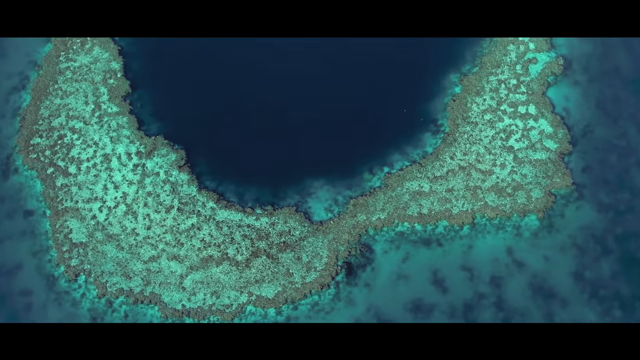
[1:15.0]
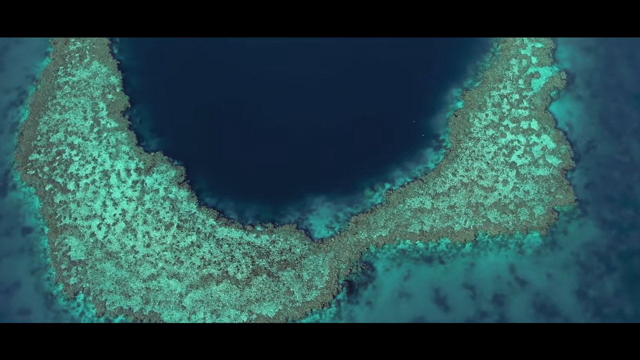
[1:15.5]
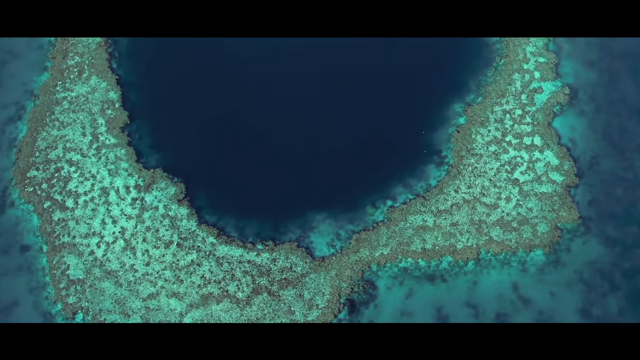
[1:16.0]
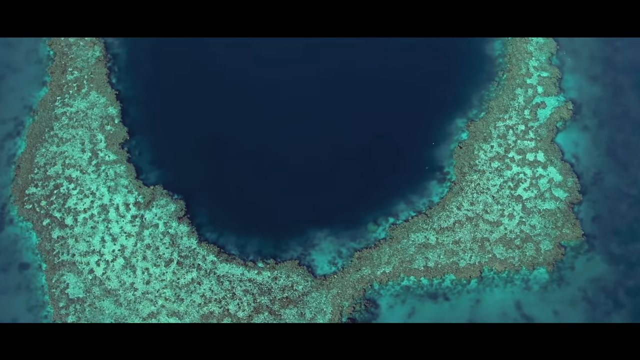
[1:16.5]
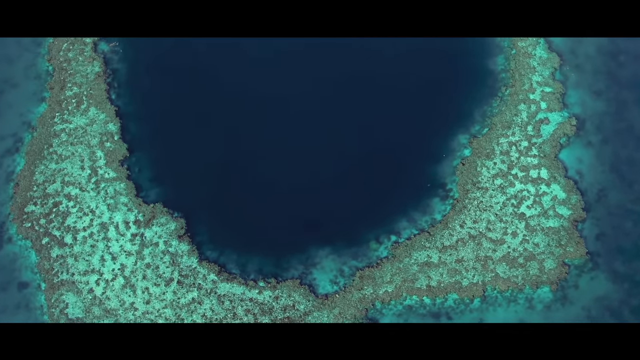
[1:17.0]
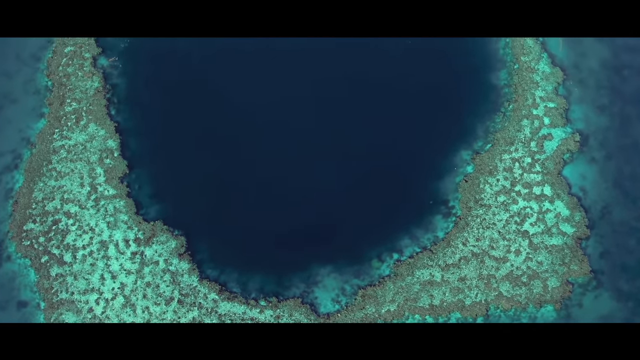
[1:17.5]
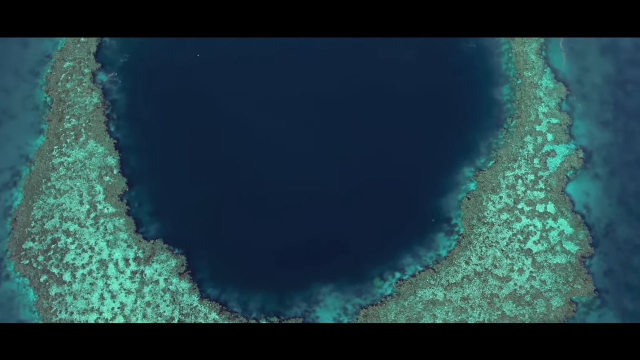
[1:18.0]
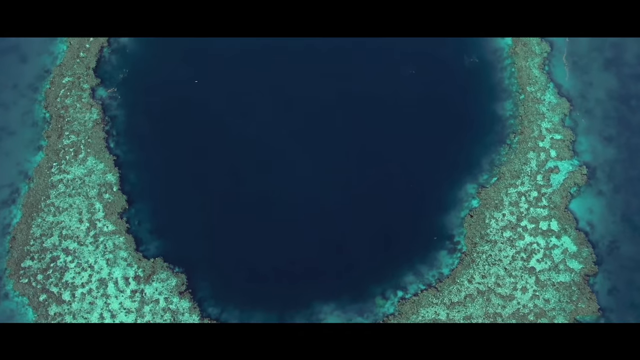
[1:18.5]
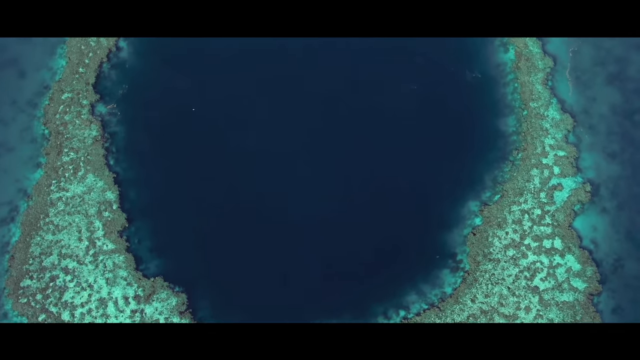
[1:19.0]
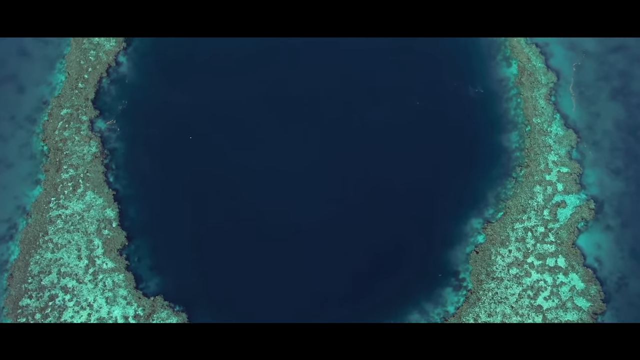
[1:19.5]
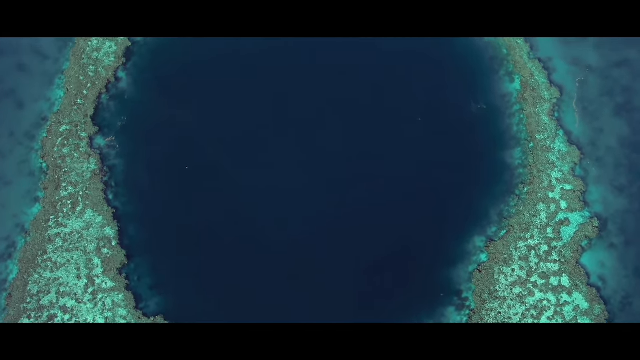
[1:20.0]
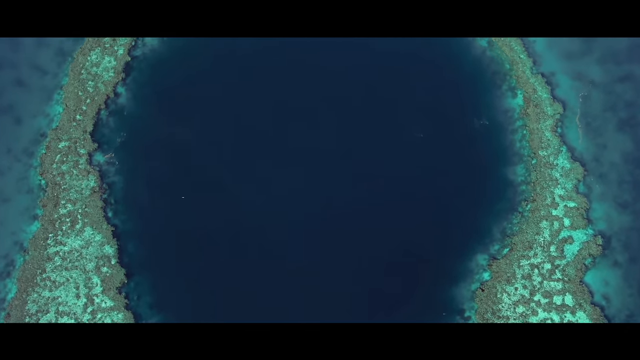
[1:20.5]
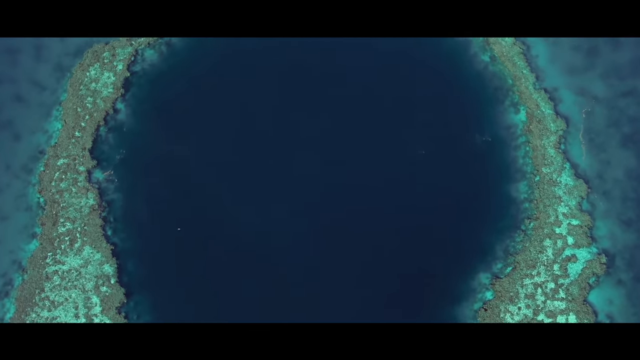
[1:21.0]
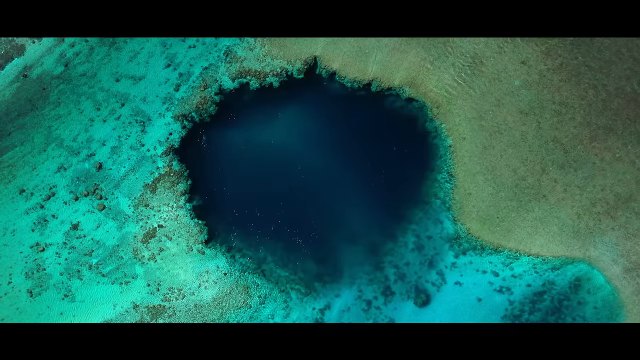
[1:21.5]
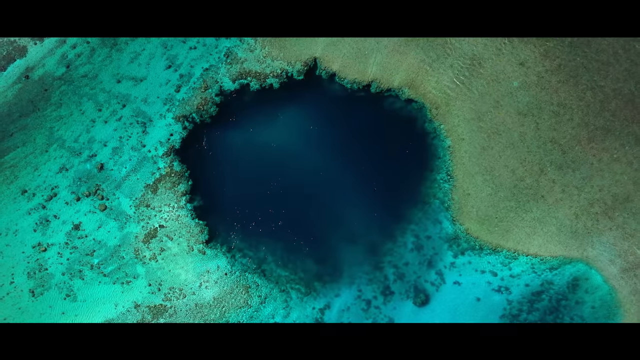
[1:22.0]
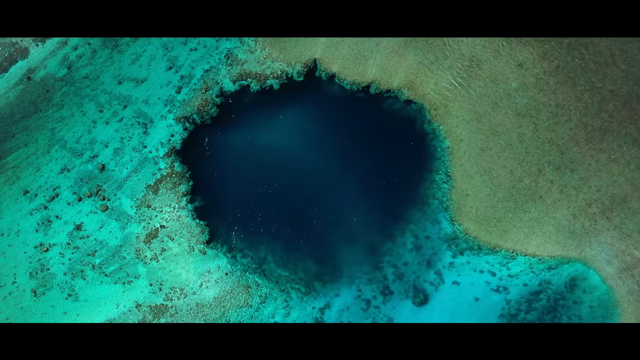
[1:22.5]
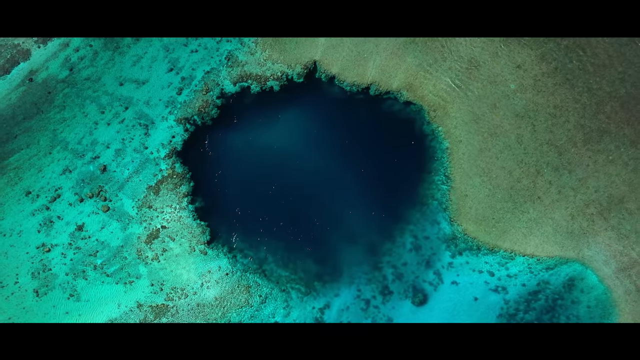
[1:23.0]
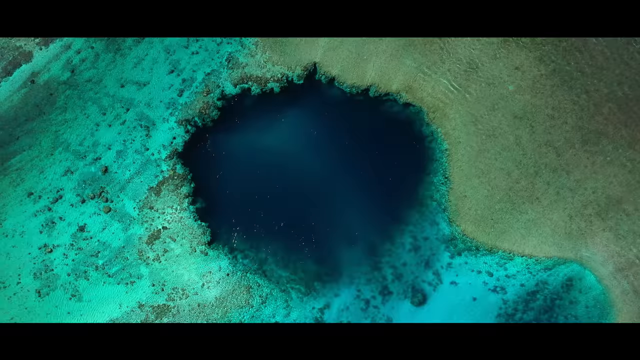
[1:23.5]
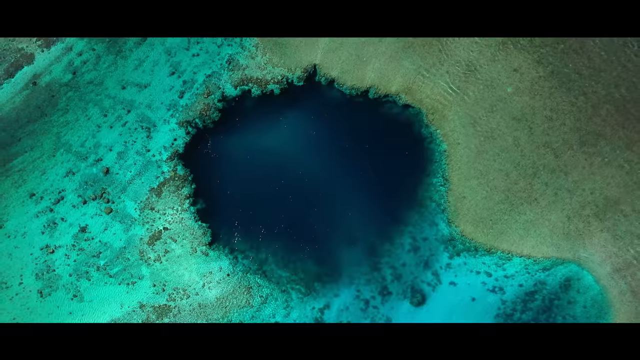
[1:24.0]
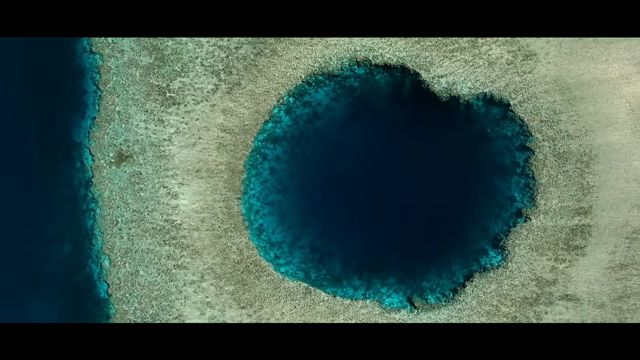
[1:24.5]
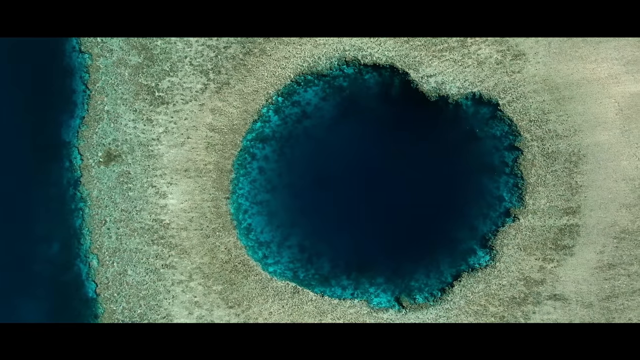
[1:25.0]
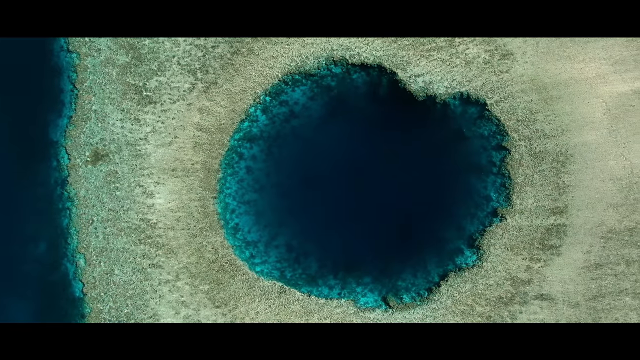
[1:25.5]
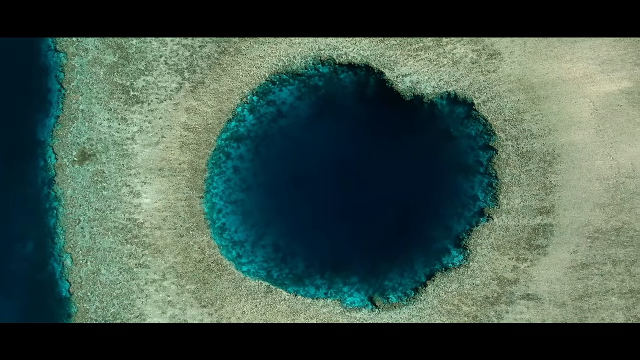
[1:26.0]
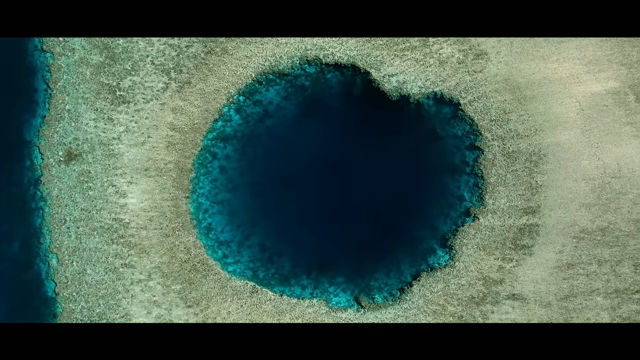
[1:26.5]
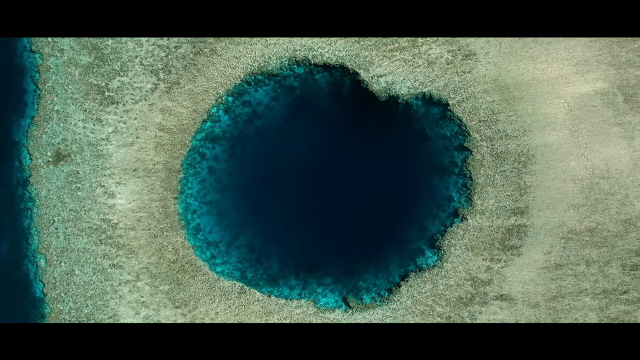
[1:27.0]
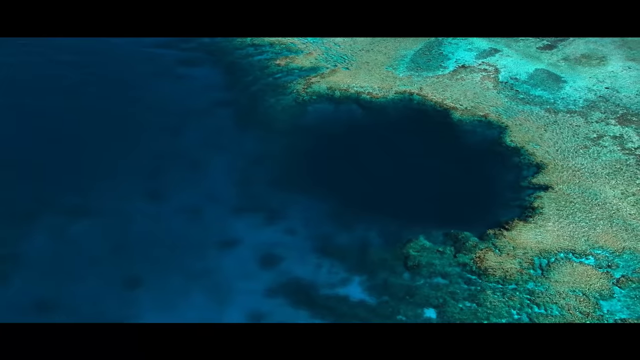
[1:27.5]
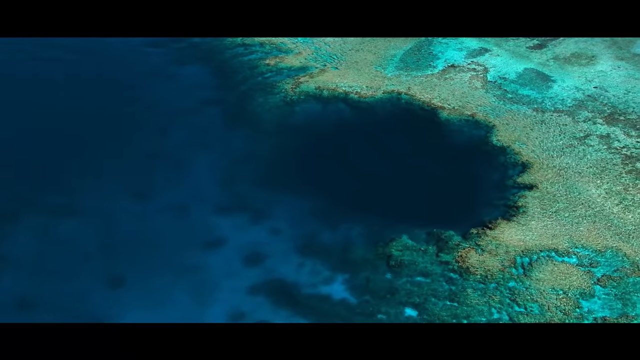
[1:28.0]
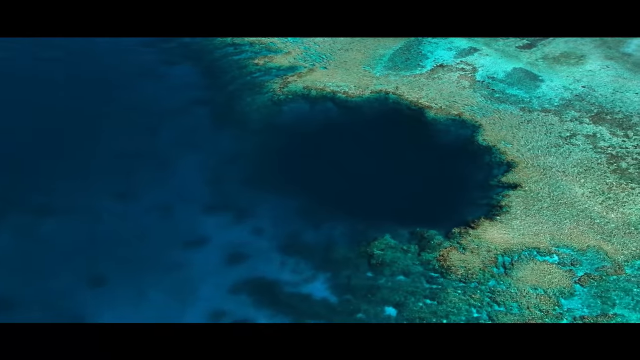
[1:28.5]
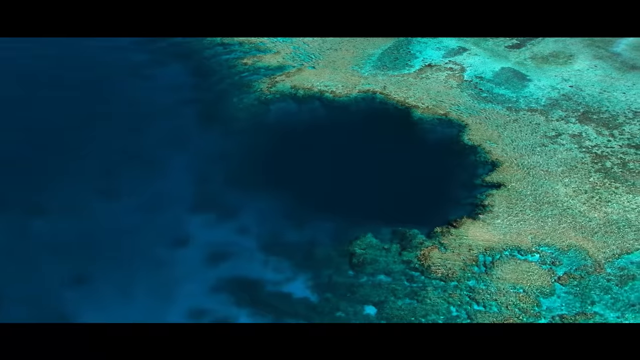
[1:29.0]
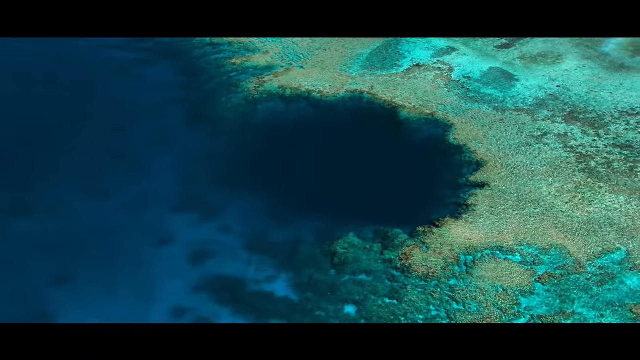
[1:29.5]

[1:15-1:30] A large blue hole in the ocean is surrounded by sand and coral reefs. The hole is rounded and darker toward the center. There are various blue holes; some have chunkier surrounds, suggesting live coral reefs, while others have smoother surrounds, suggesting less coral and more sand. They are lighter around the outer edges and get a deeper, darker blue toward the middle, suggesting great depth. Most are irregular circles. One is an irregular circle with corals on the right side and is more flattened on the left side, opening to the greater ocean without much of a defined perimeter. They have various textures and tones around them: lots of browns, yellows, oranges, greens and blues.